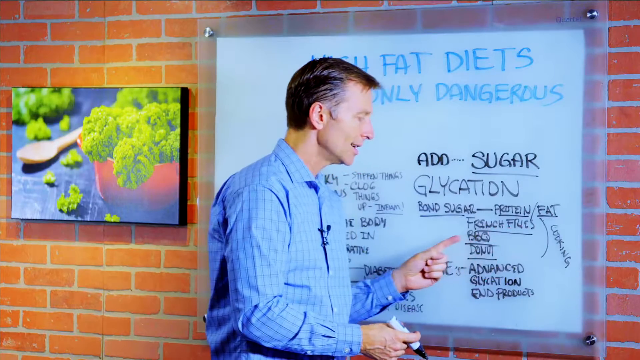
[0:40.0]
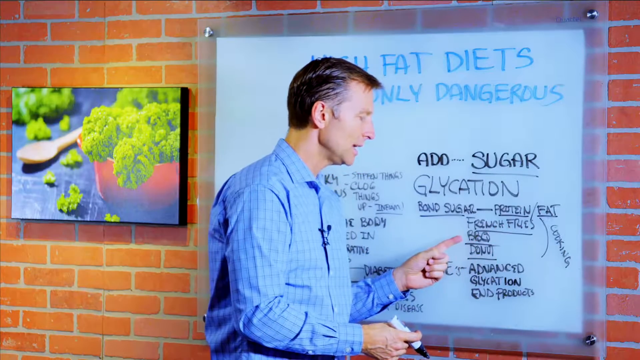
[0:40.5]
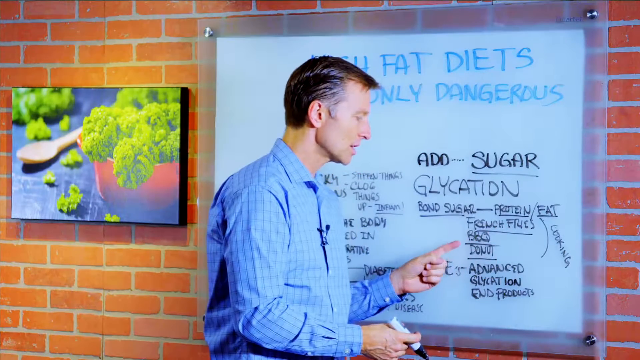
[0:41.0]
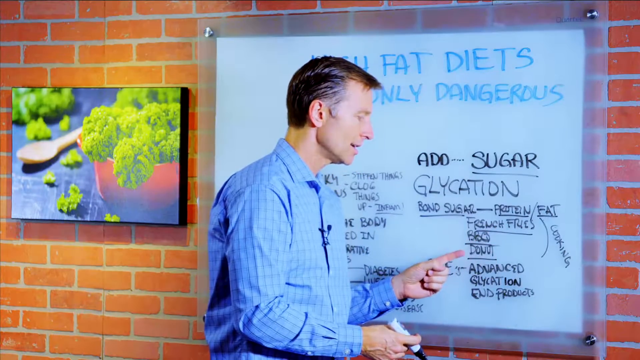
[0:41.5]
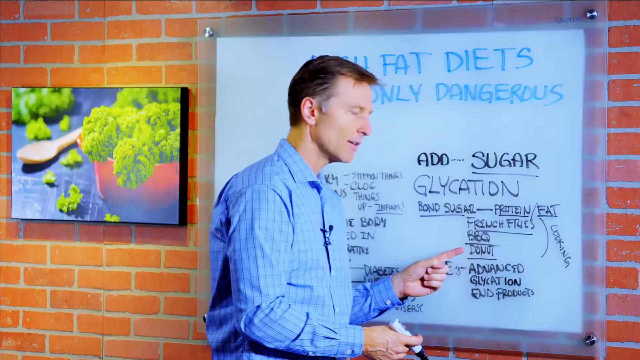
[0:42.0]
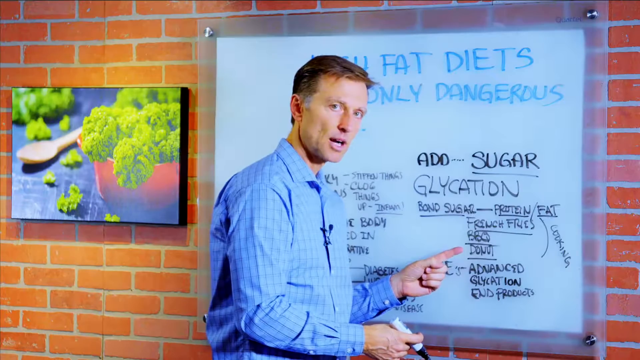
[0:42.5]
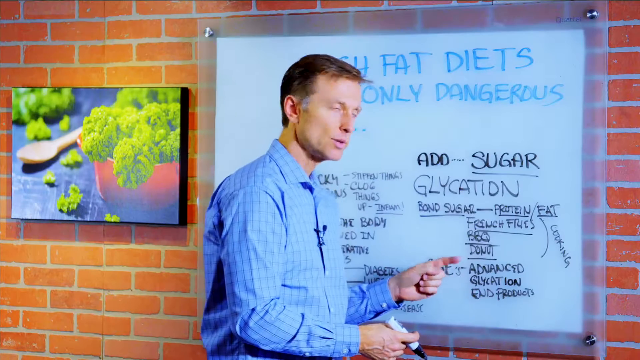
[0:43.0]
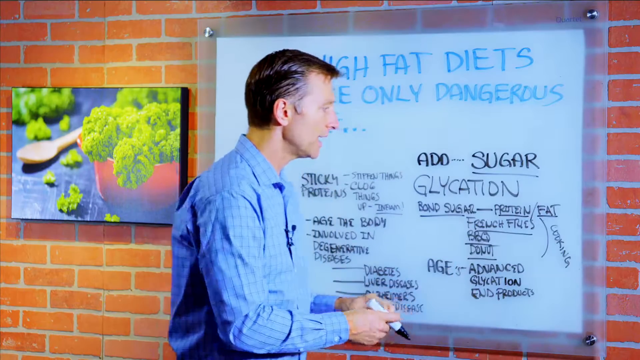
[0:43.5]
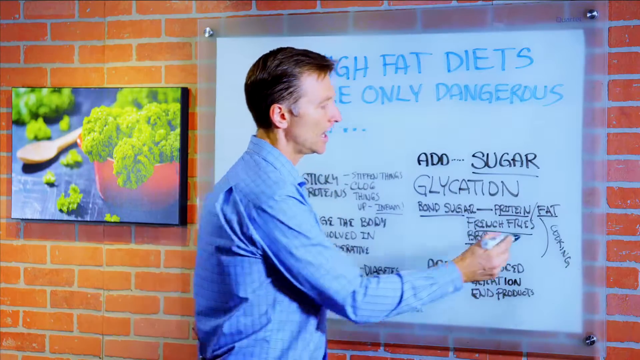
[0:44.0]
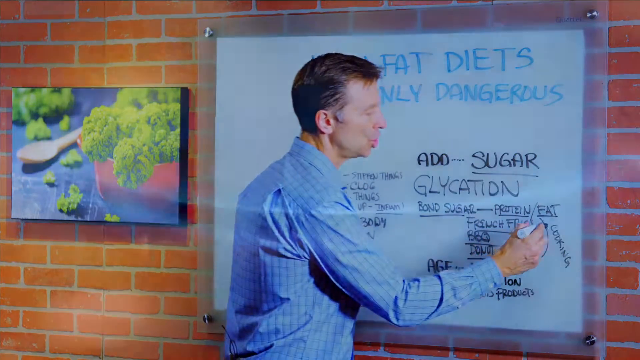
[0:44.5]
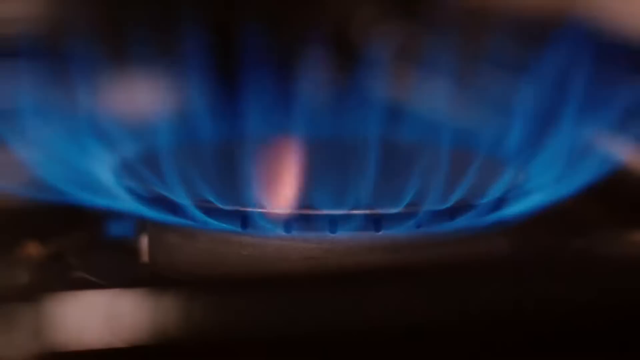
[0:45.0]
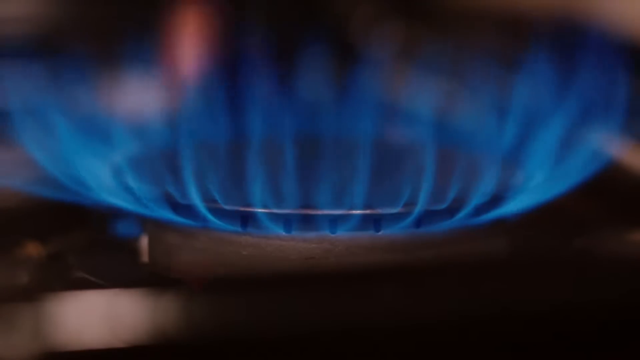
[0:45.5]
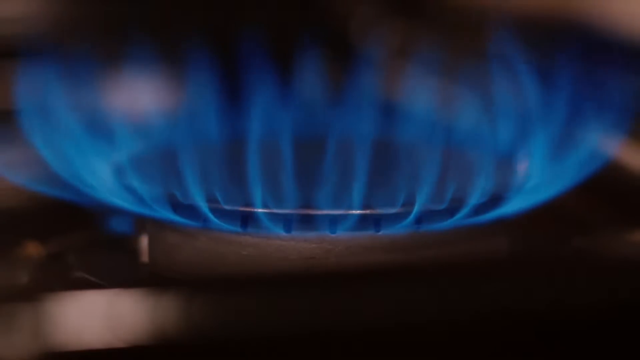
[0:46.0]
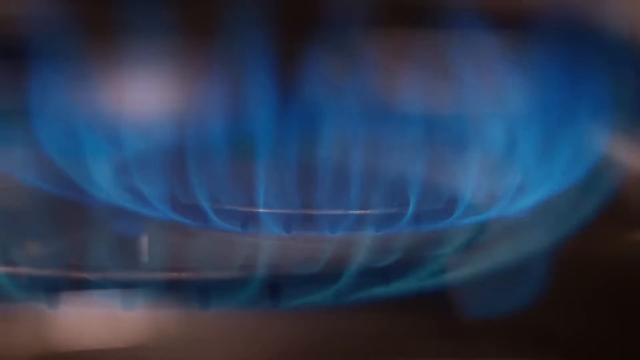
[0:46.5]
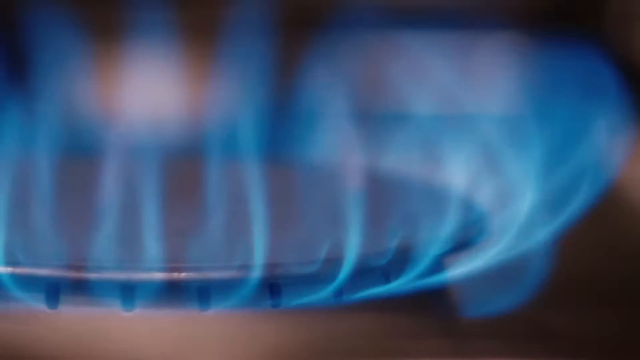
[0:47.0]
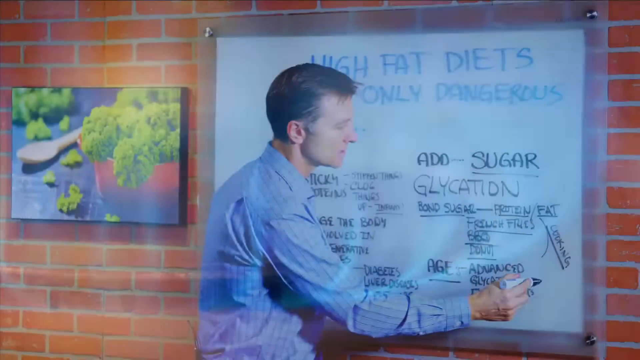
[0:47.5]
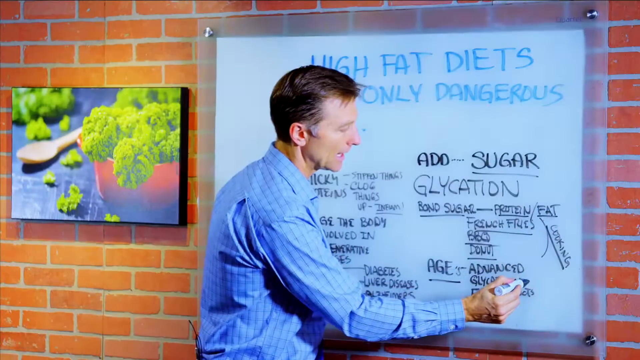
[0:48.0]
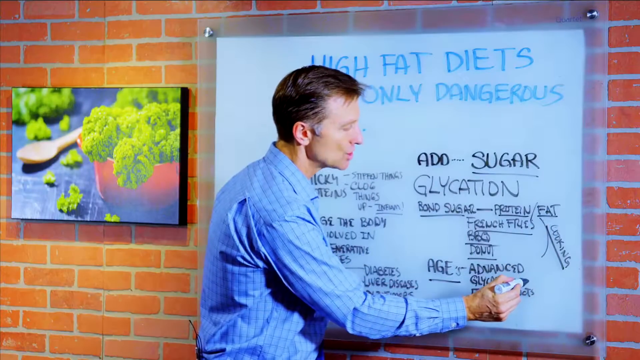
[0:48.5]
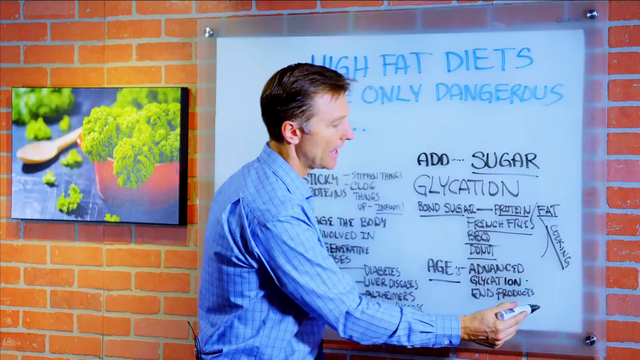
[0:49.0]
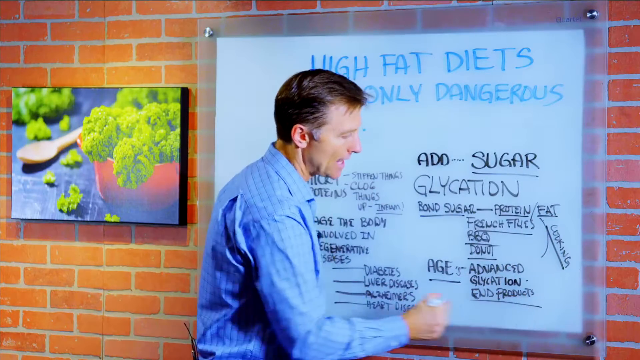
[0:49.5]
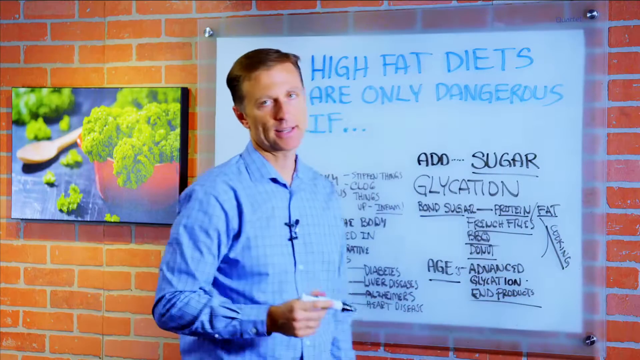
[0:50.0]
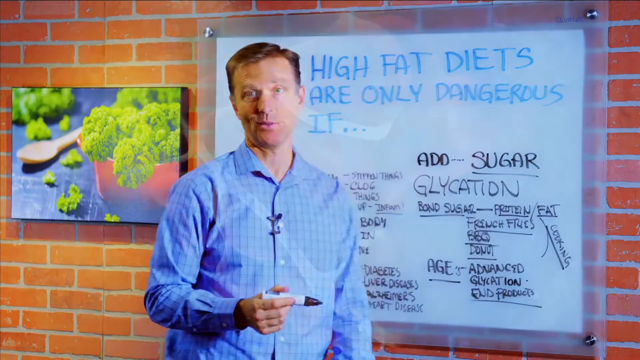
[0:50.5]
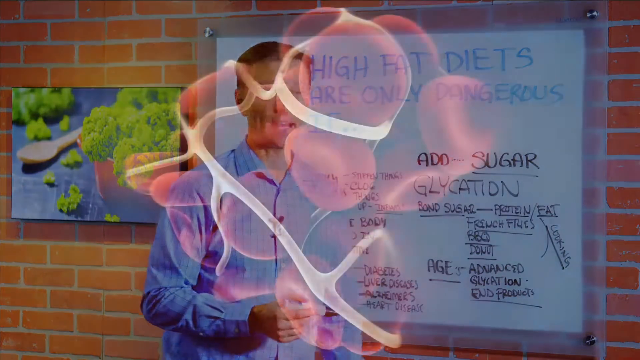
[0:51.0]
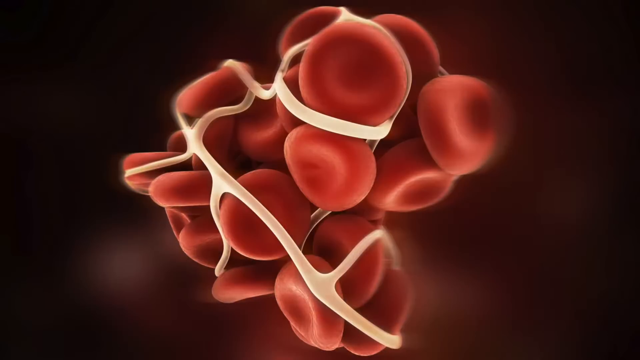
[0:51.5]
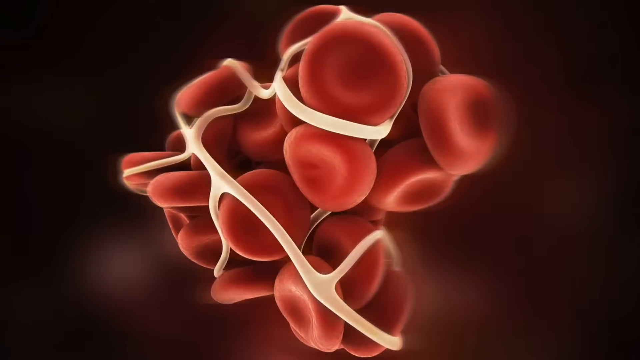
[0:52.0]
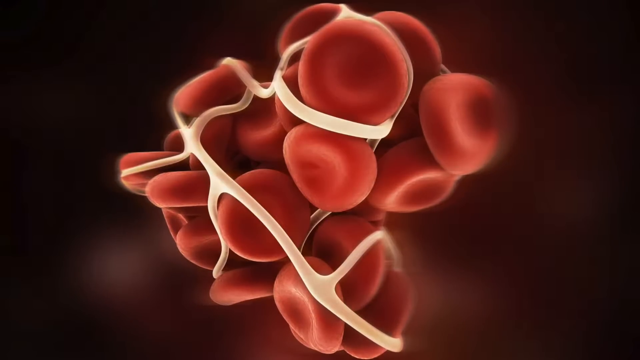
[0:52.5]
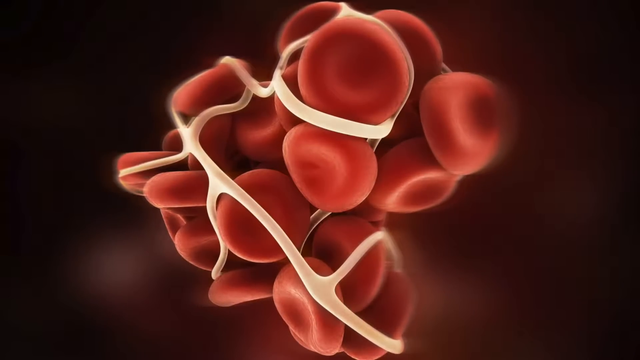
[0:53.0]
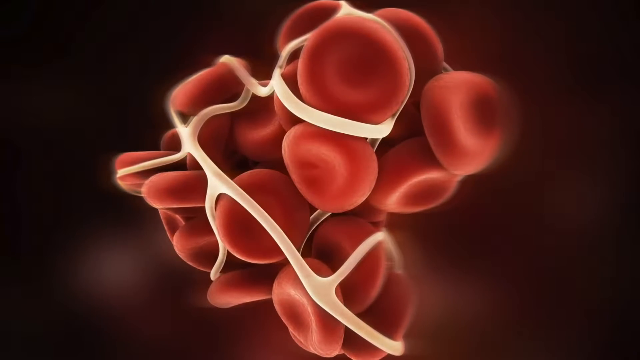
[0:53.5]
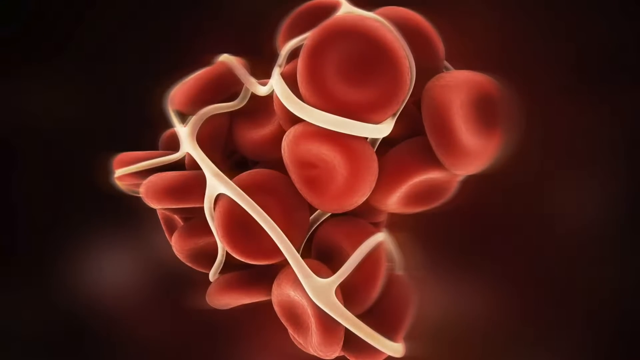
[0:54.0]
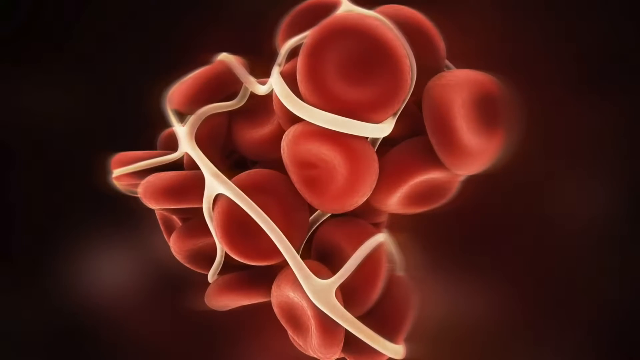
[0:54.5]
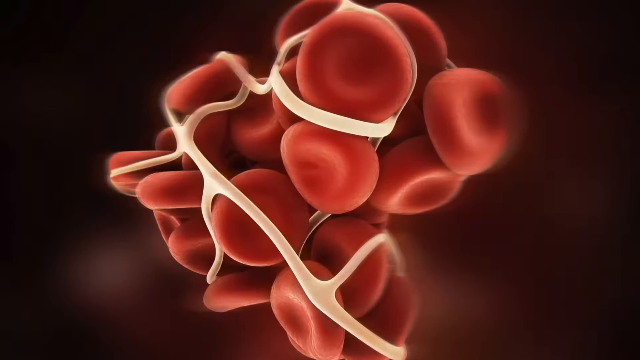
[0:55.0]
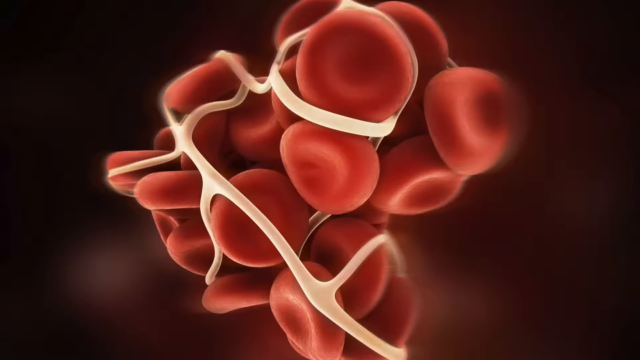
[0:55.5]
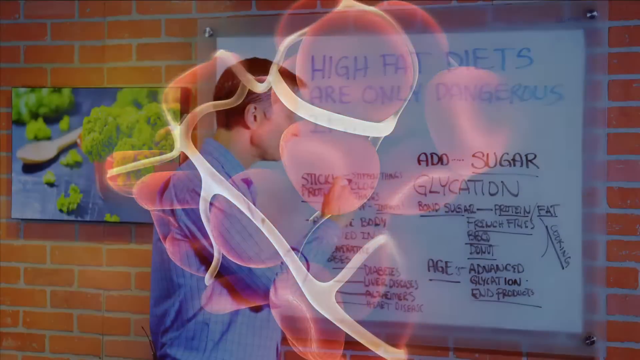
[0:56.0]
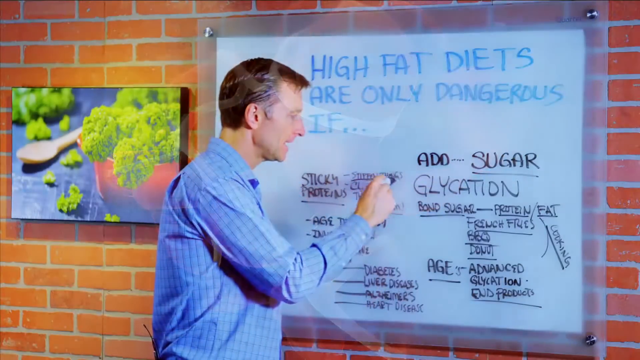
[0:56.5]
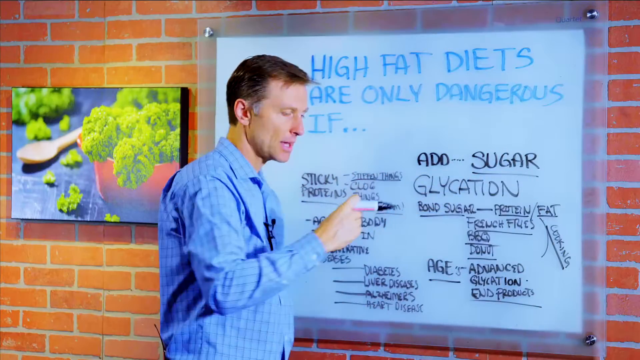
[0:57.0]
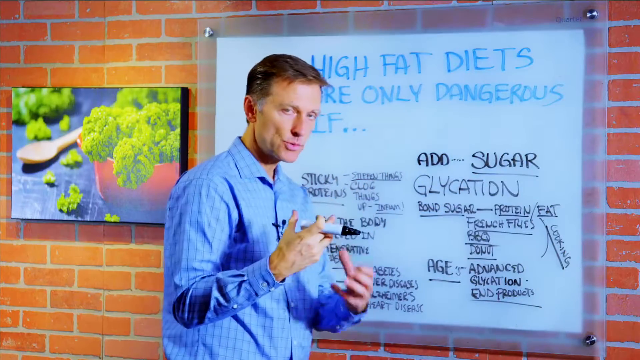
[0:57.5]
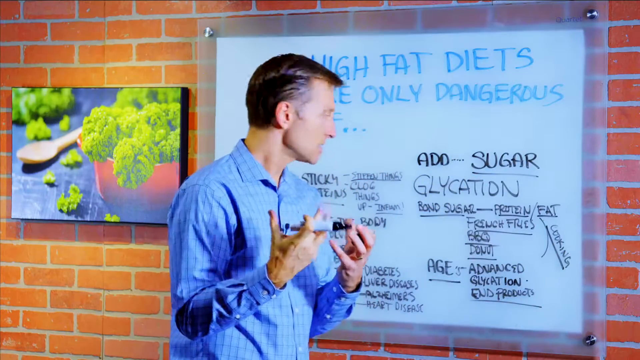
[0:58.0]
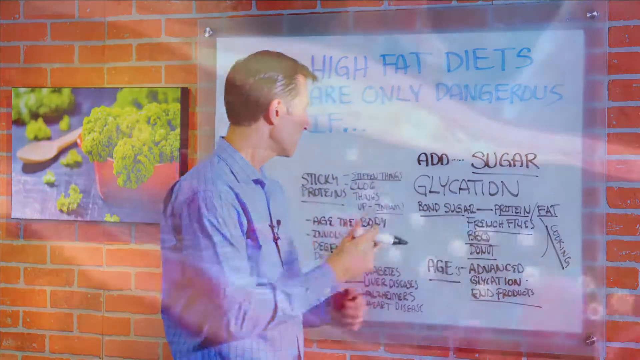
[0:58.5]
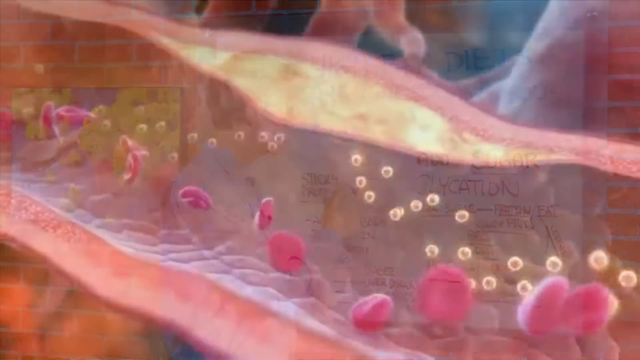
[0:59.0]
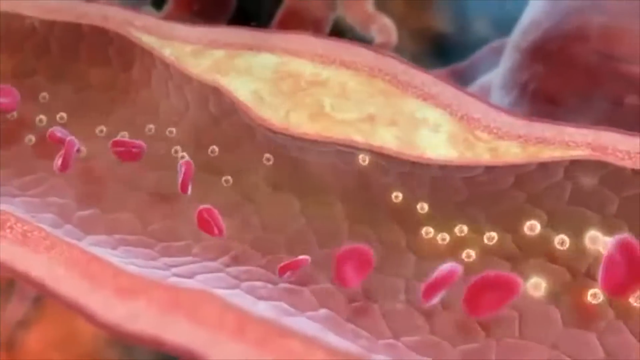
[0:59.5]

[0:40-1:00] Fire is visible, seemingly part of a cooking process. Afterward, what seems to be a diagram of the human body appears, possibly illustrating glycation.